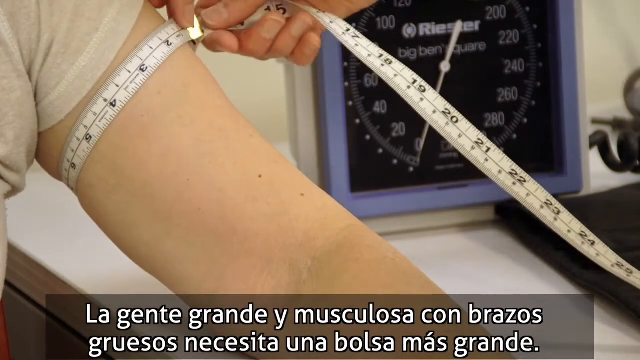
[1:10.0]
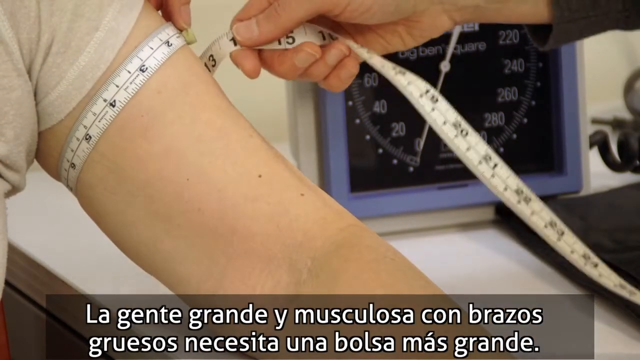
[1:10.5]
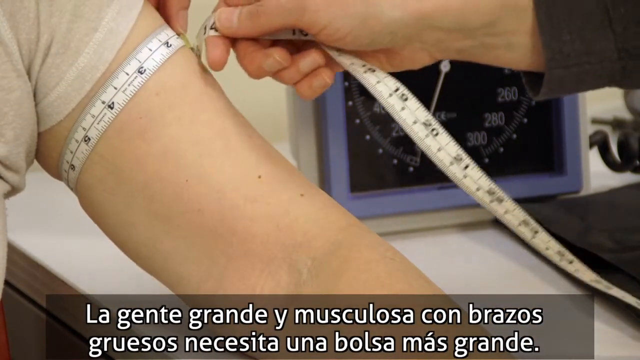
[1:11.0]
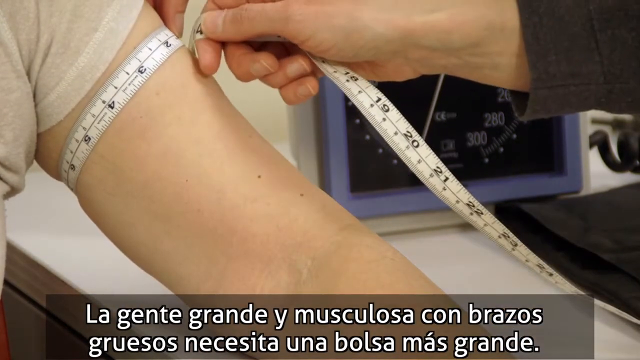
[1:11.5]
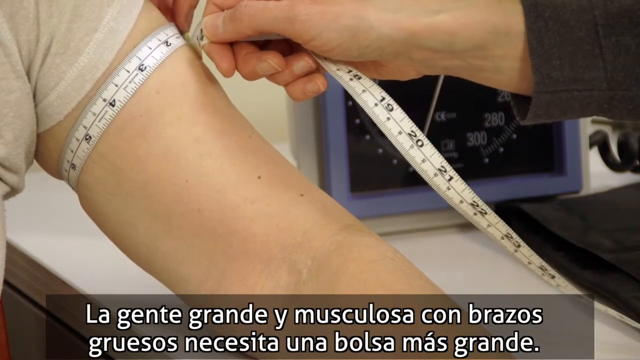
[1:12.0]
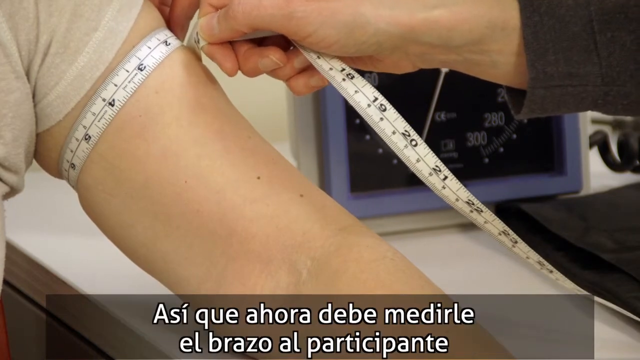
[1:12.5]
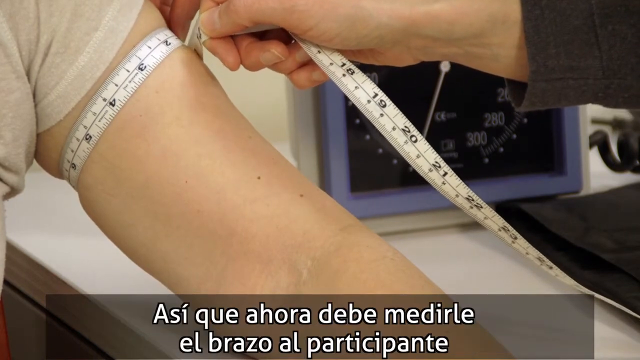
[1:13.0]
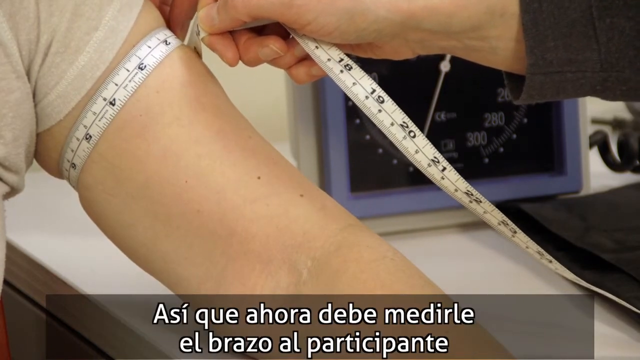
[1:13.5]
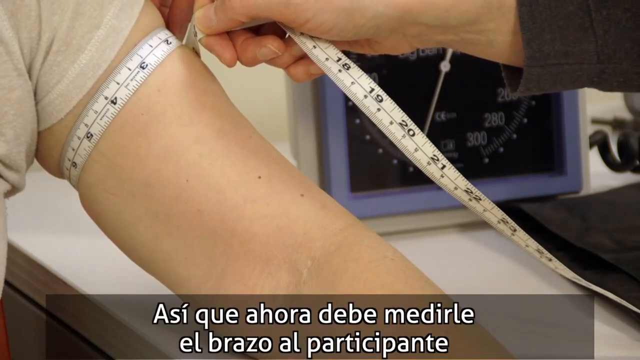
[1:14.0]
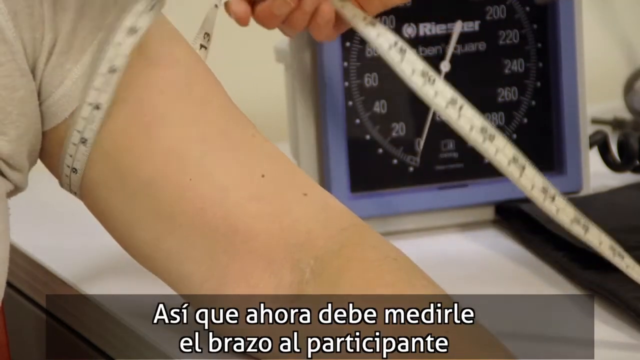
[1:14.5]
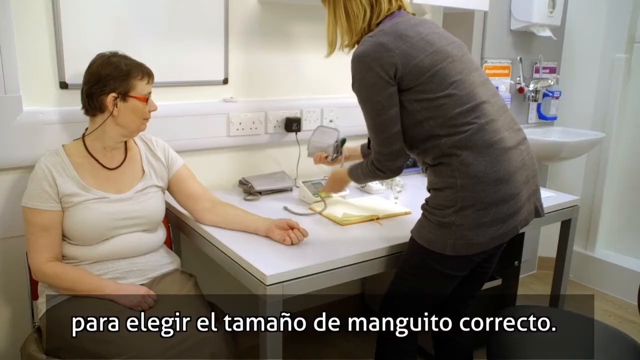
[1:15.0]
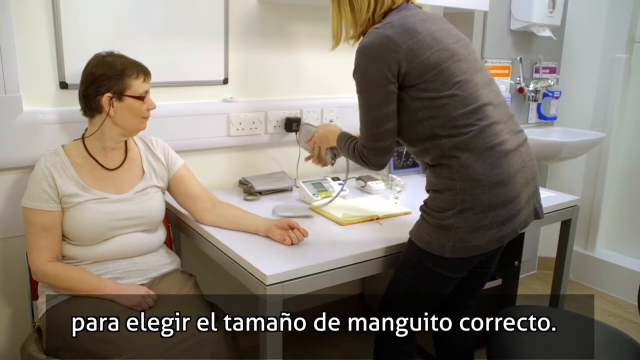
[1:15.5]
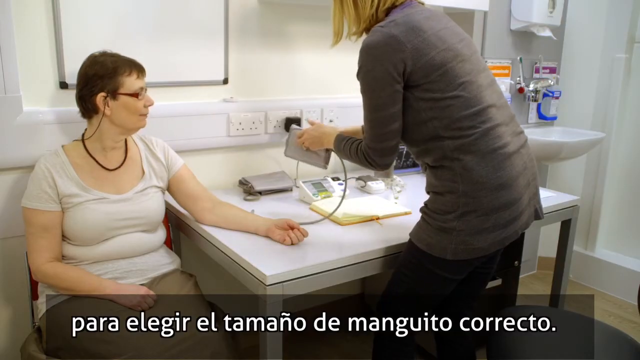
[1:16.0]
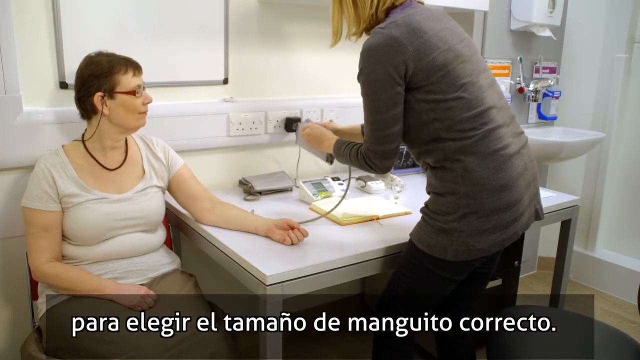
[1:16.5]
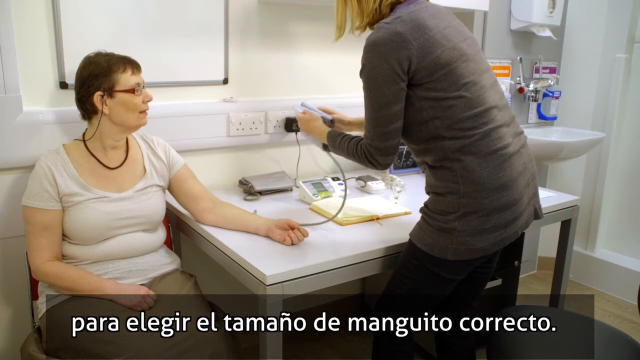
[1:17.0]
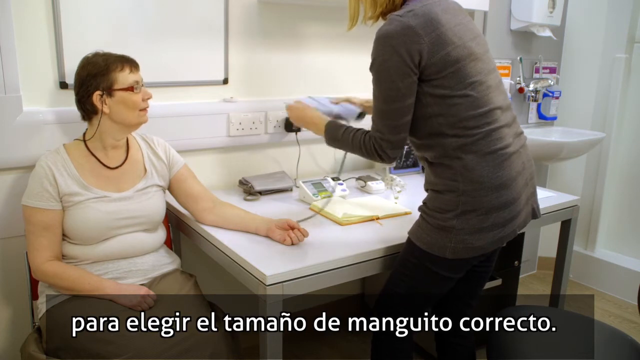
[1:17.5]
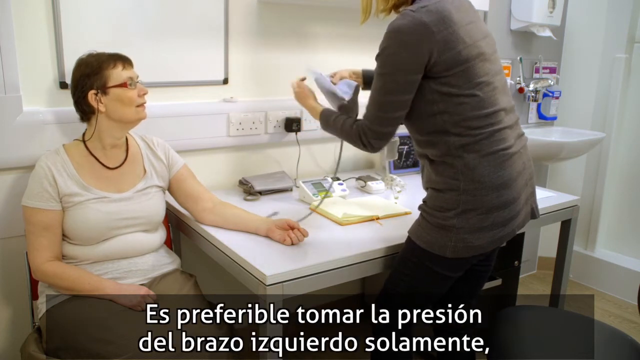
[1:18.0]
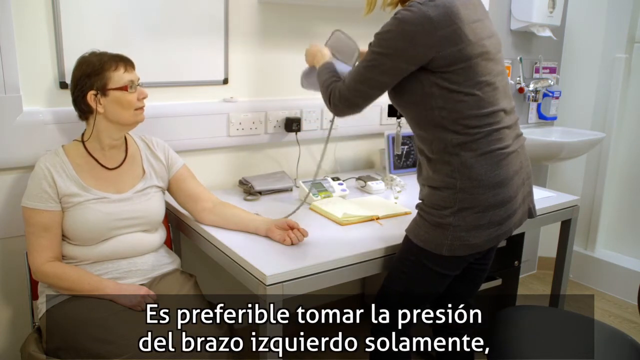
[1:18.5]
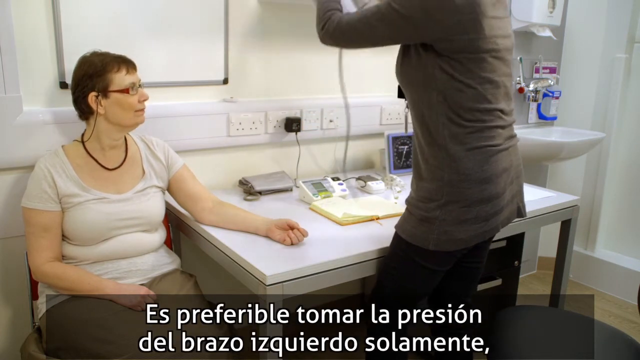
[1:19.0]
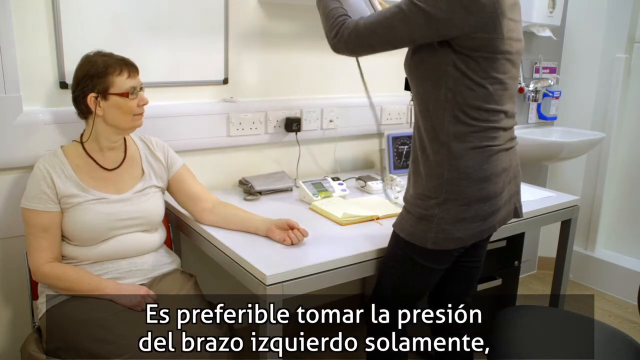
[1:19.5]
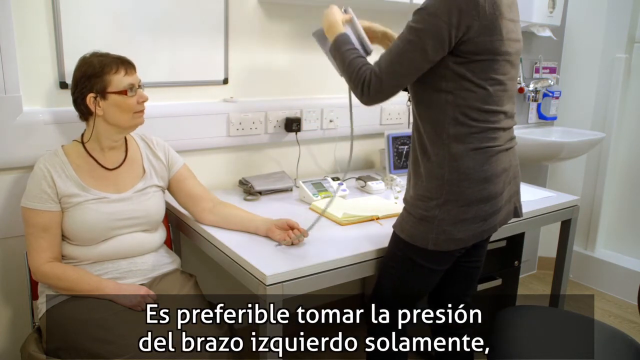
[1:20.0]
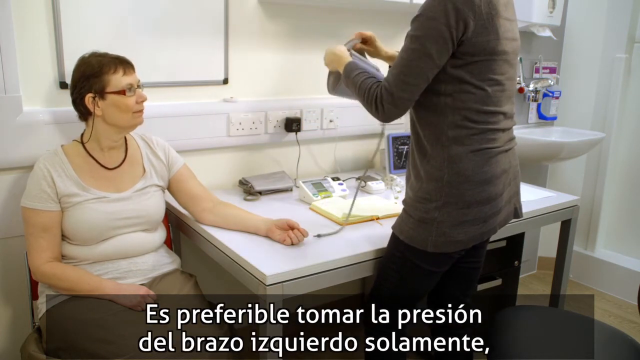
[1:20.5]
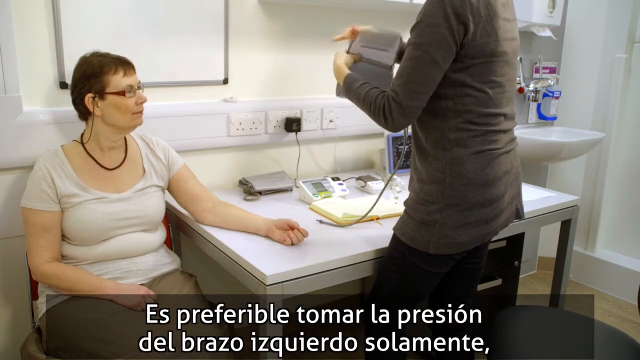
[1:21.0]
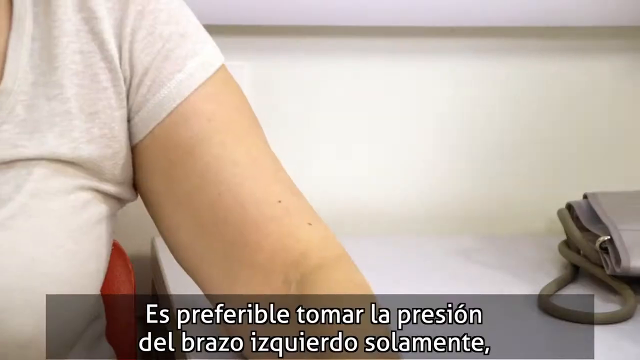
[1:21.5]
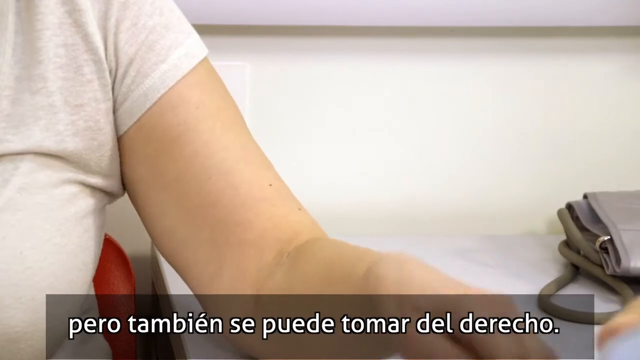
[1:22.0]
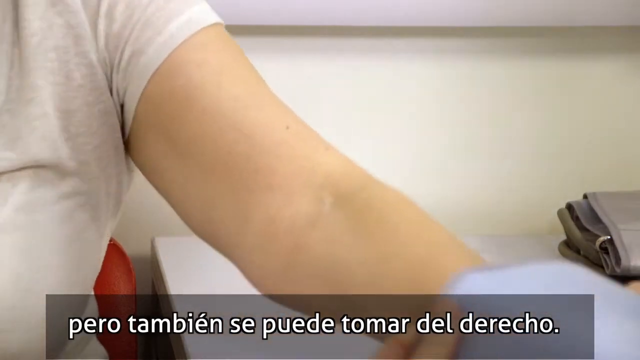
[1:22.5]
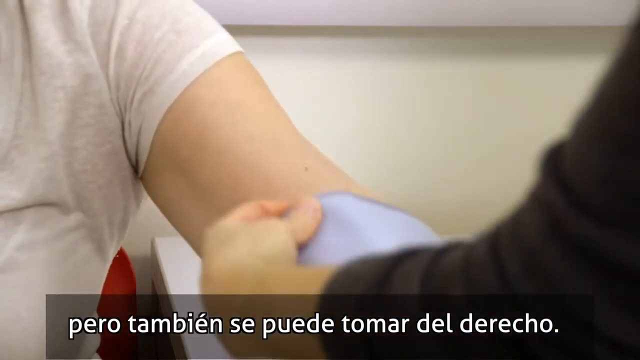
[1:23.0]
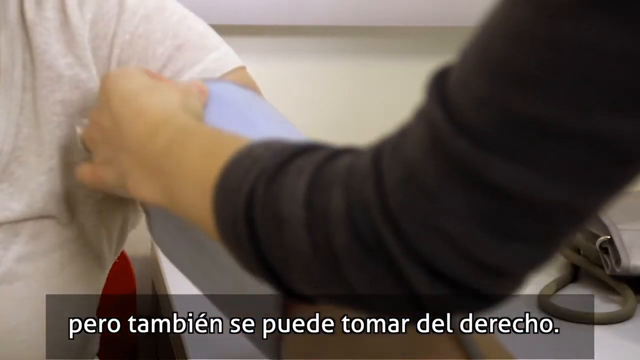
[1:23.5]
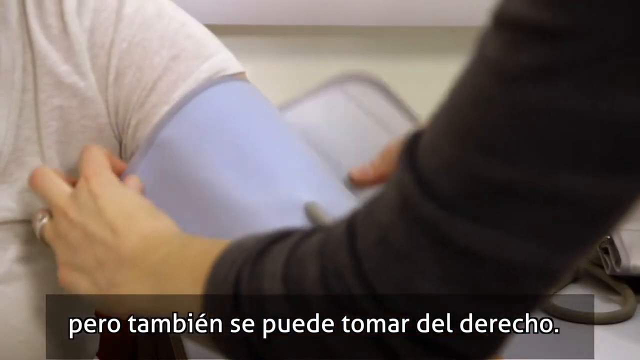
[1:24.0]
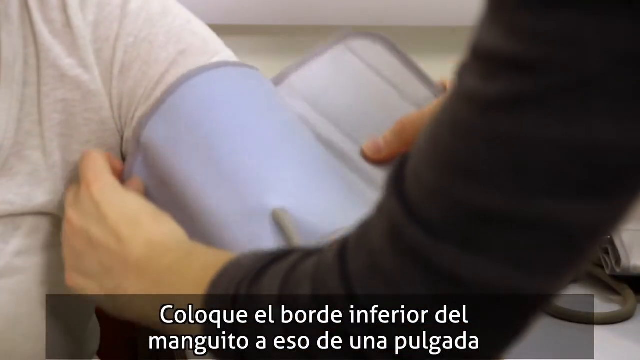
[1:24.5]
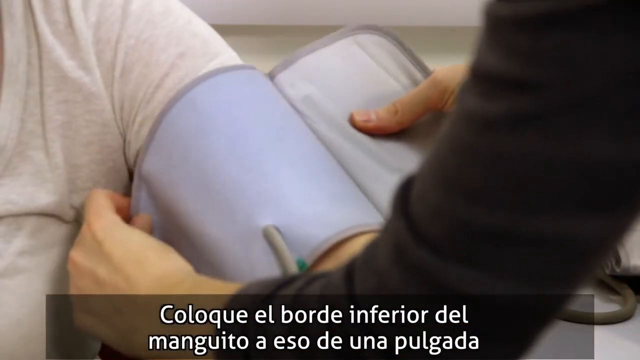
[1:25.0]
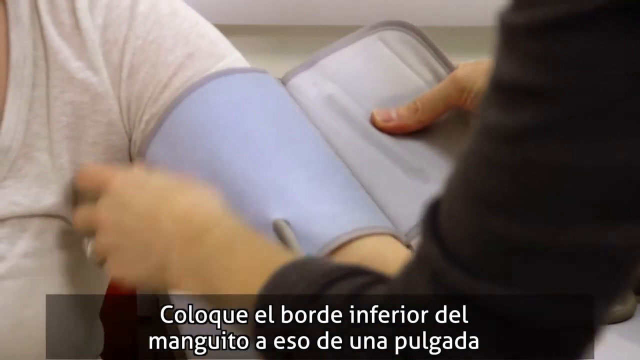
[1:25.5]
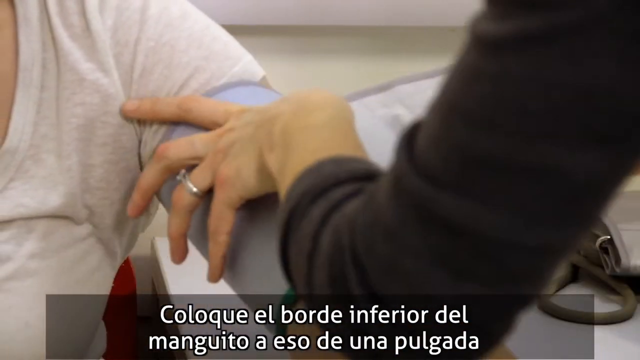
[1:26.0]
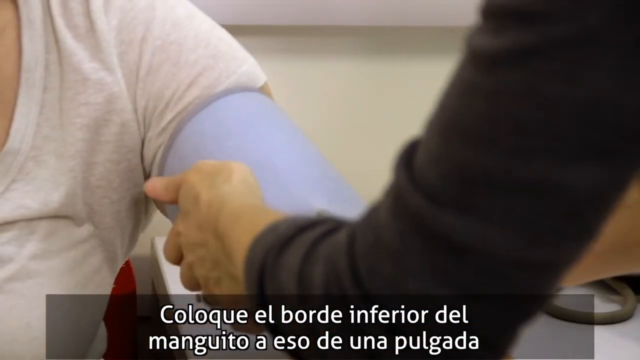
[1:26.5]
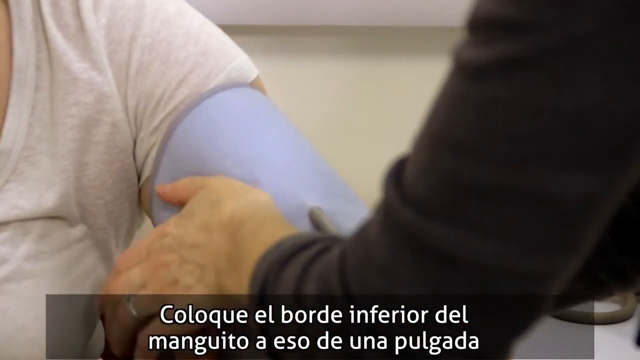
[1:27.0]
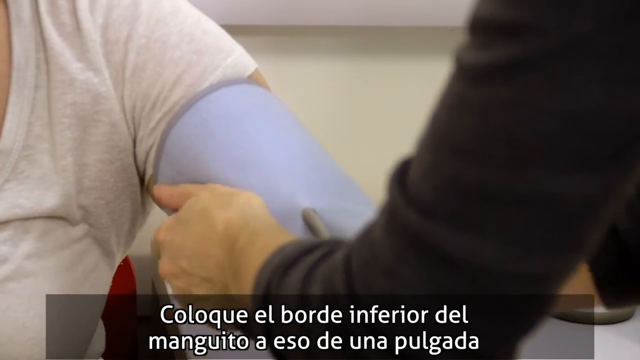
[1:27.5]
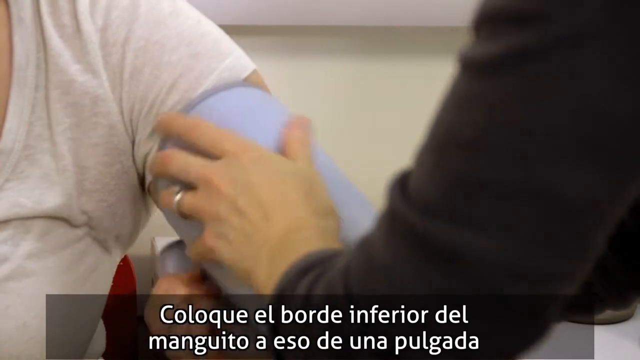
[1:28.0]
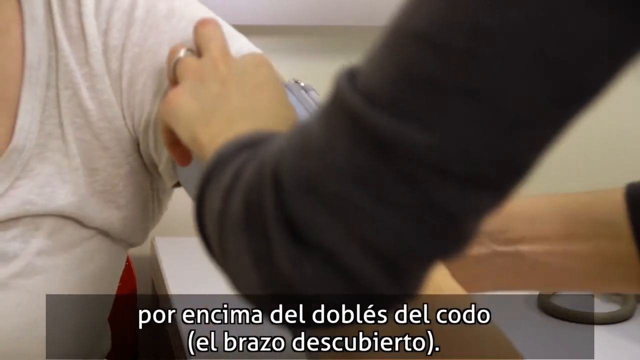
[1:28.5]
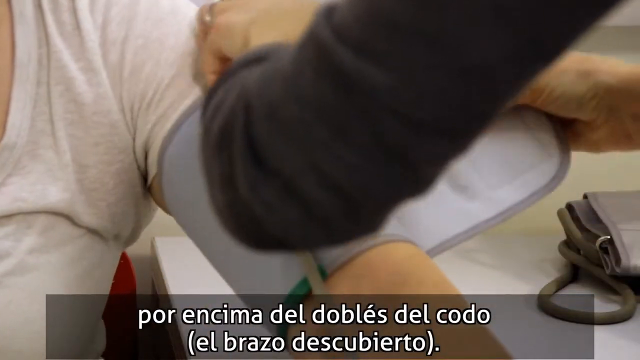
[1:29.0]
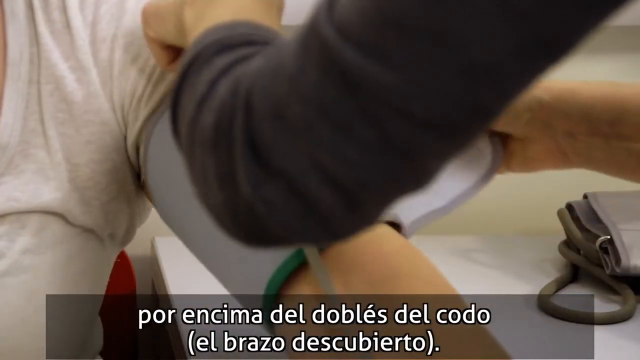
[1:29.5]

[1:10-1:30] A Caucasian woman is having her blood pressure measured in a doctor's office. The nurse measures her bicep area, then takes a blood pressure cuff, puts it on the woman's arm, pulls it back and tightens the Velcro so it fits properly. In the background is a blood pressure monitor dial, a blue square with a small clock-like hand; the brand appears to read R-I-E-S-T-E-R. On the lower left the dial starts at zero and rises in increments of 20: 20, 40, 60, 80, 100, then it is cut off; down the right side it reads 200, 220, 240, 260 and on down to 280.